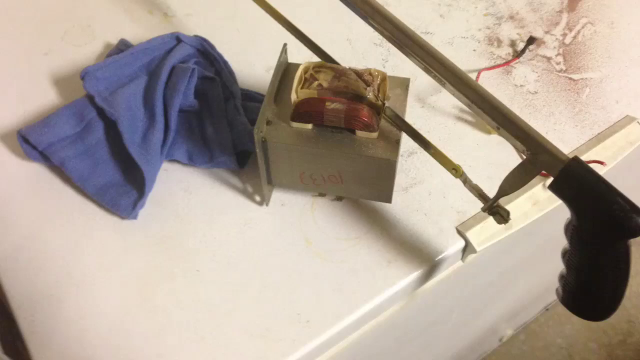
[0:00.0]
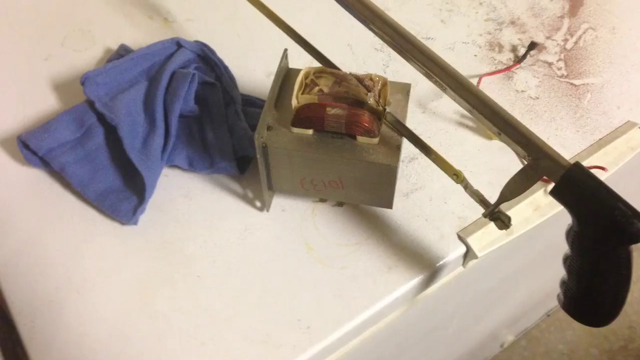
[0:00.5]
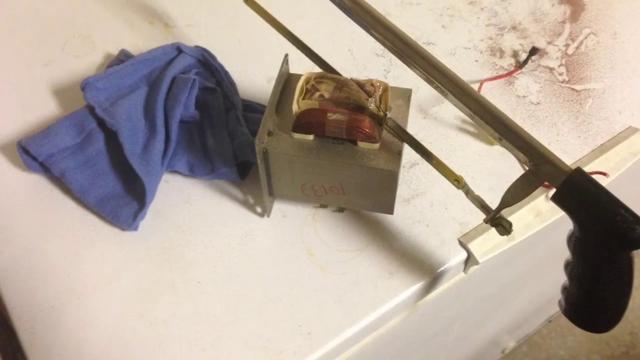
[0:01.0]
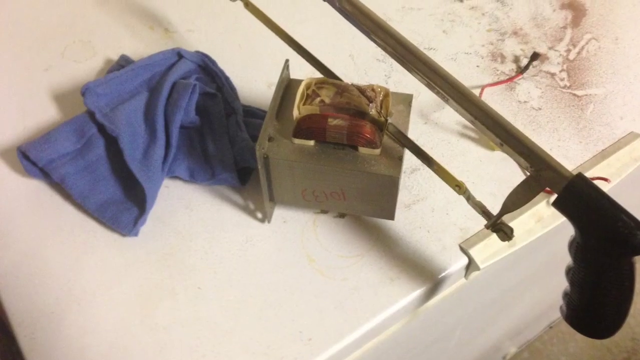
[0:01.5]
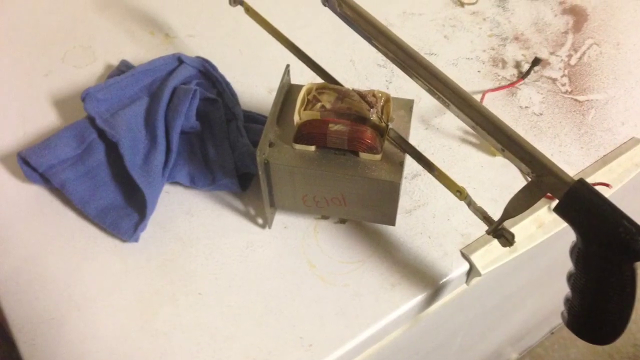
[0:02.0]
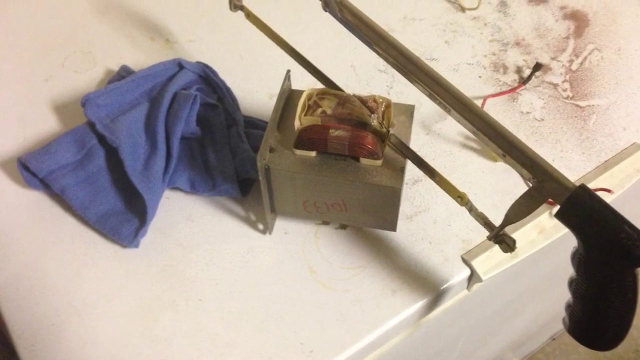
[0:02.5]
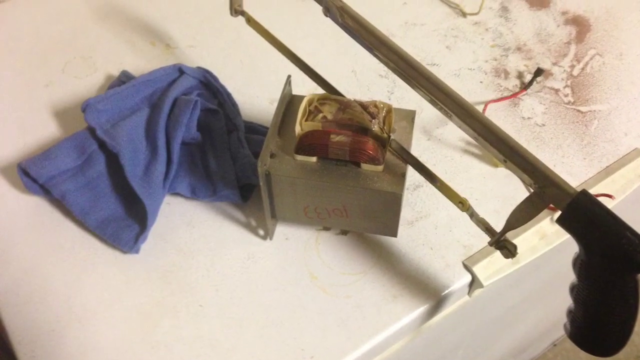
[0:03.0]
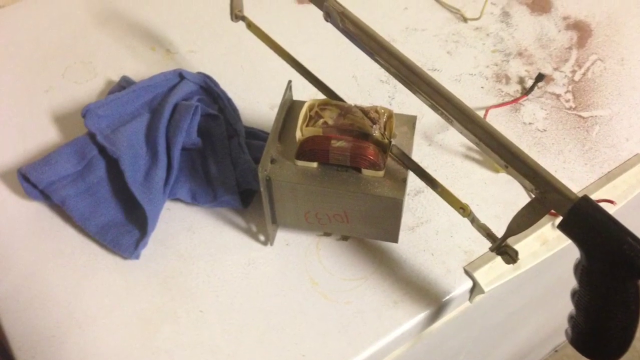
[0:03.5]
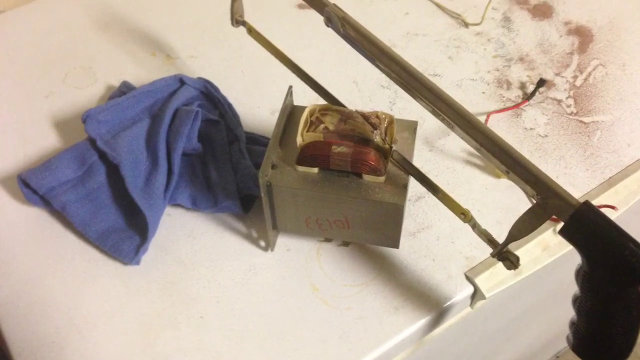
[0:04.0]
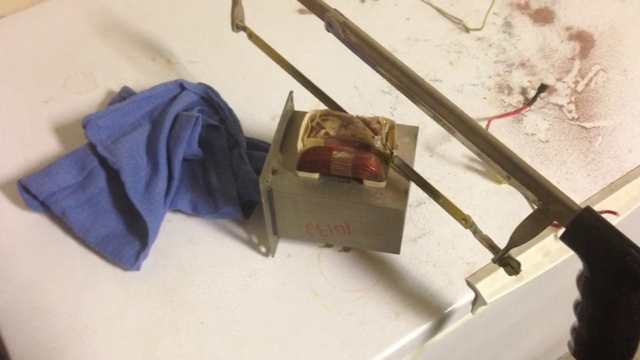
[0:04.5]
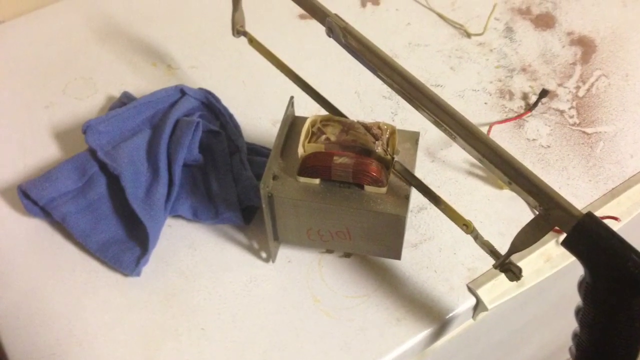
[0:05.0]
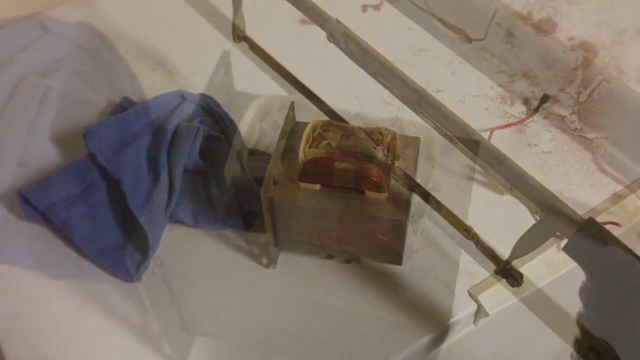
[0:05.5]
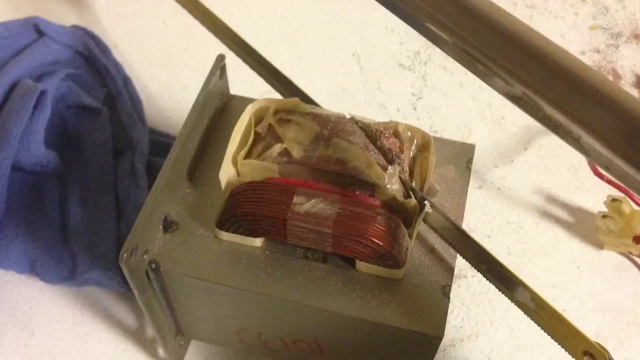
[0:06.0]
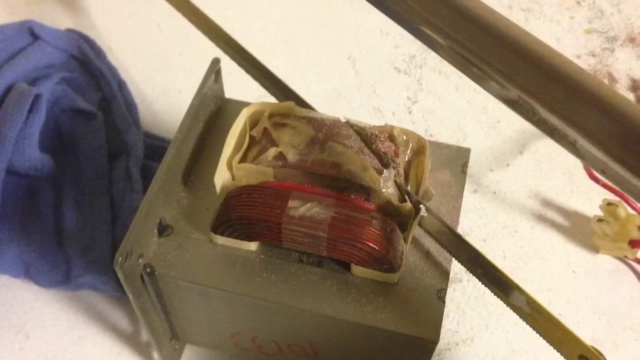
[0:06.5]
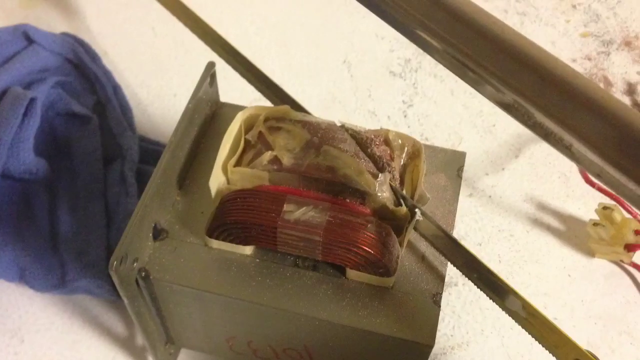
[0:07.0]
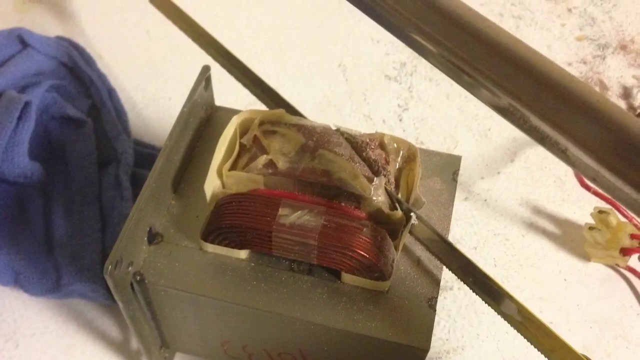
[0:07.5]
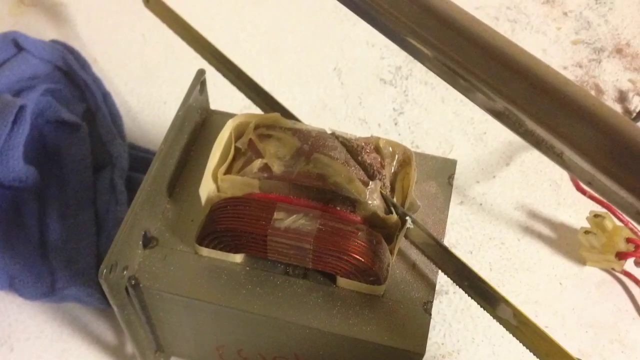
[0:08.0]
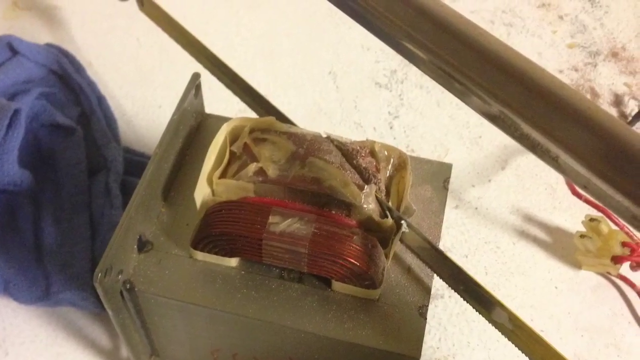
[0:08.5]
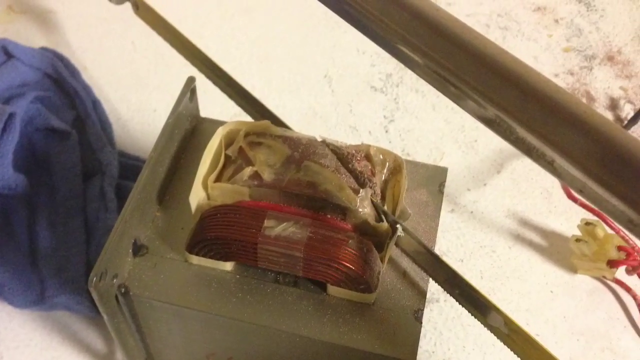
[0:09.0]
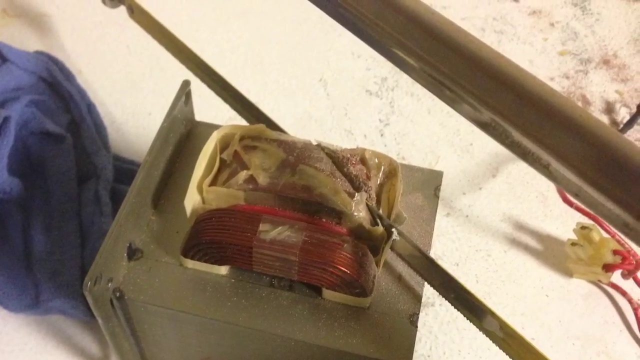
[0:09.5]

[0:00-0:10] A blue cloth appears on the left side, and then the view moves to a block holding a spool of copper wire, oriented somewhat diagonally. A hacksaw lies diagonally across the top of it. The camera pans upward until almost the tip of the hacksaw is visible, then zooms in on the wire block, showing the hacksaw's blade cutting diagonally into it, cutting off the upper right corner of some sort of material on the block. The camera then pans to the right.